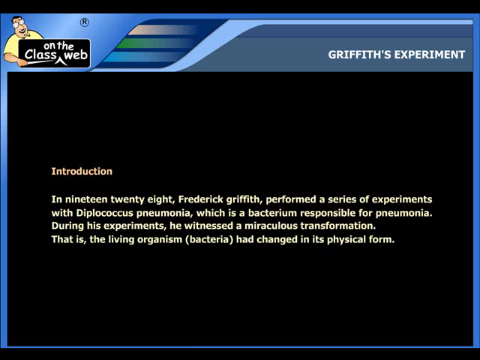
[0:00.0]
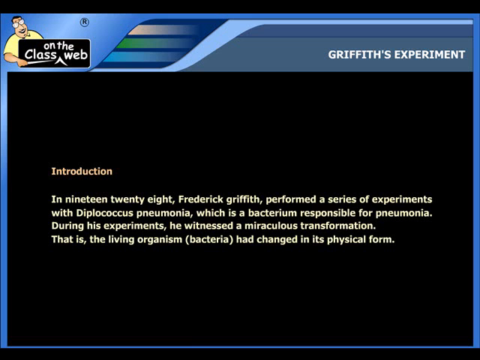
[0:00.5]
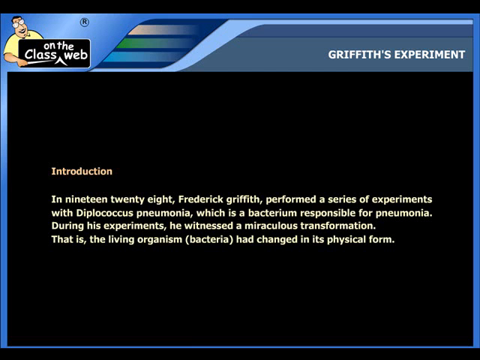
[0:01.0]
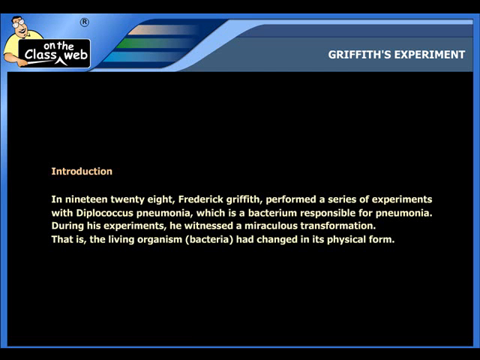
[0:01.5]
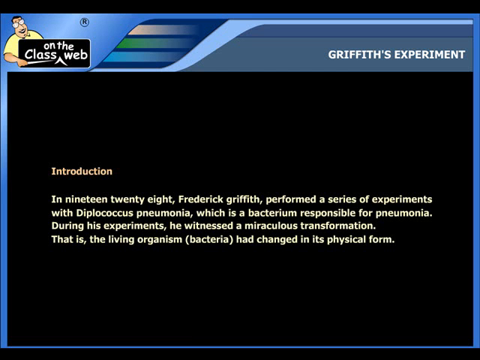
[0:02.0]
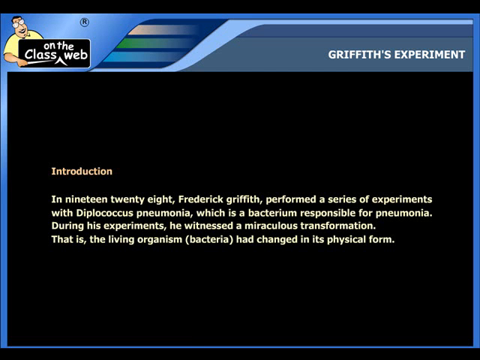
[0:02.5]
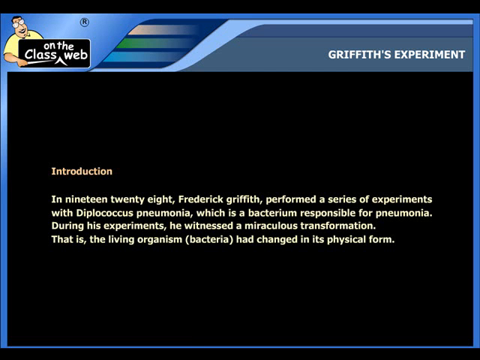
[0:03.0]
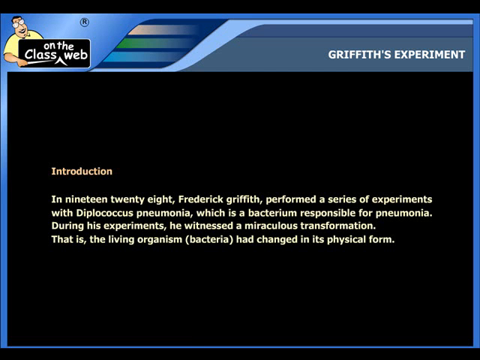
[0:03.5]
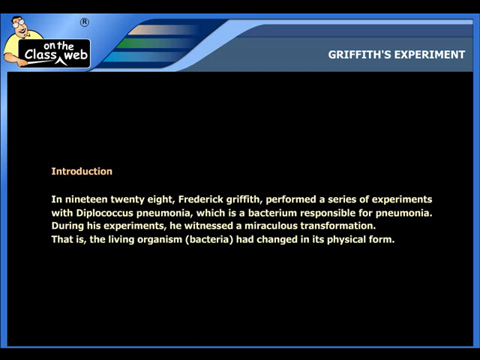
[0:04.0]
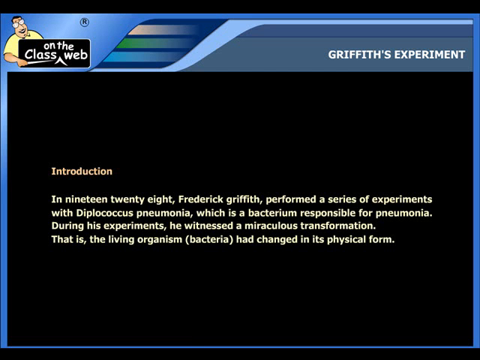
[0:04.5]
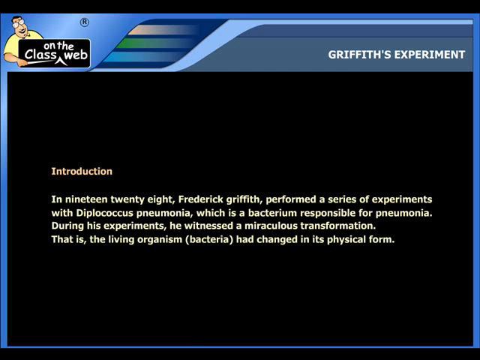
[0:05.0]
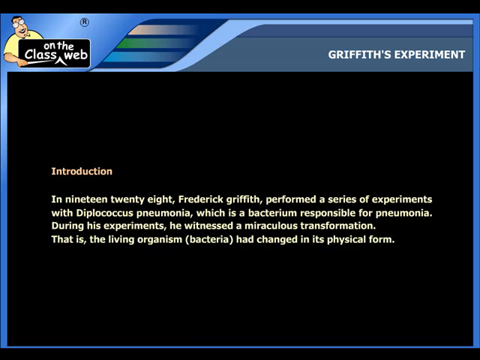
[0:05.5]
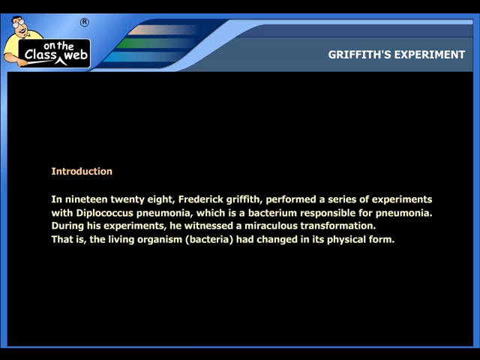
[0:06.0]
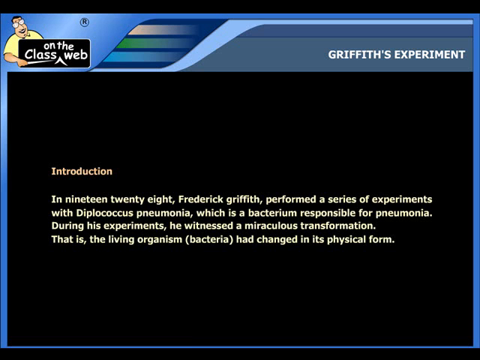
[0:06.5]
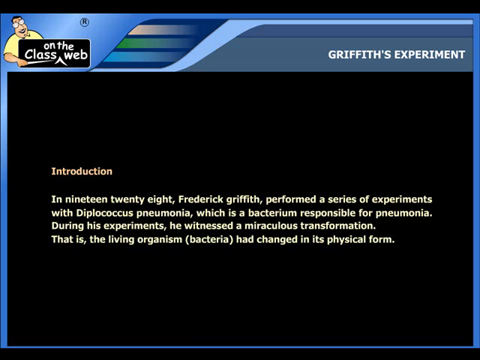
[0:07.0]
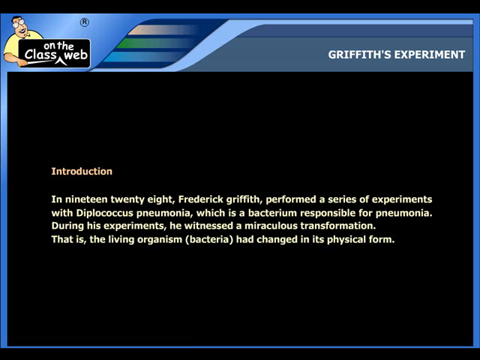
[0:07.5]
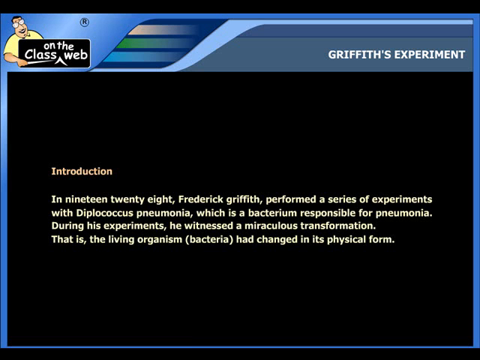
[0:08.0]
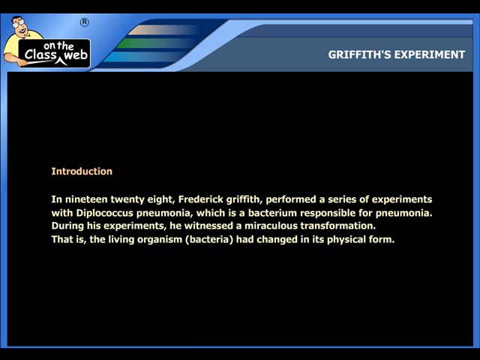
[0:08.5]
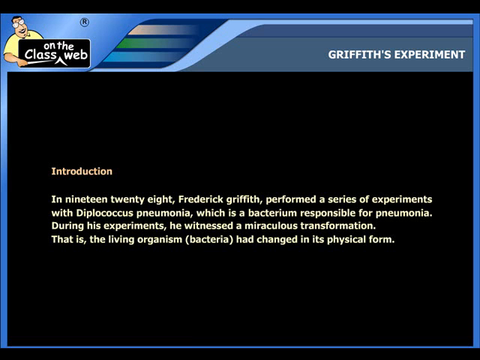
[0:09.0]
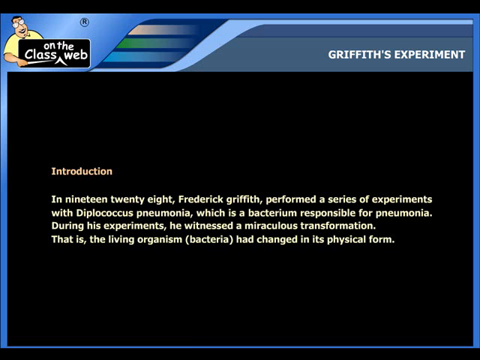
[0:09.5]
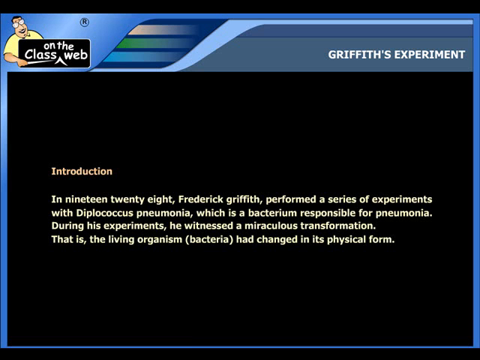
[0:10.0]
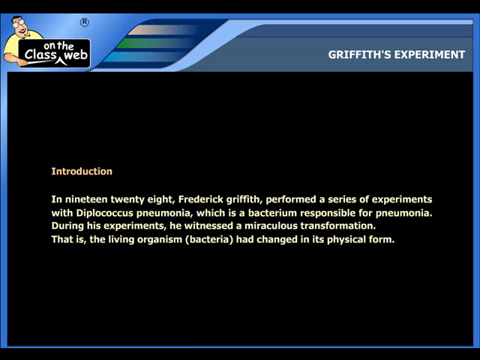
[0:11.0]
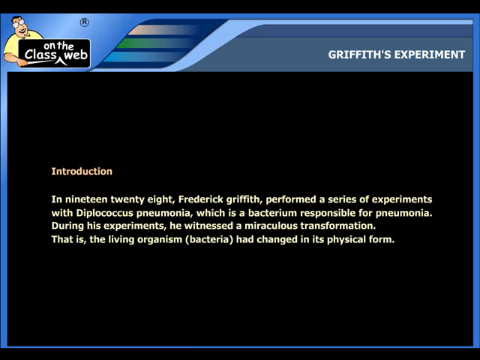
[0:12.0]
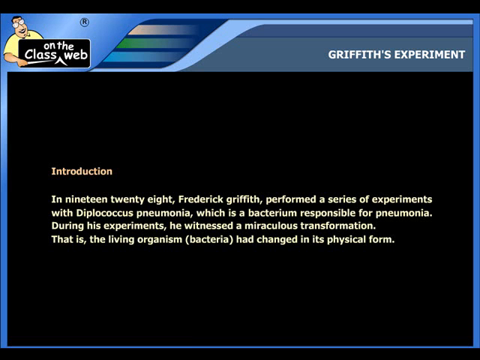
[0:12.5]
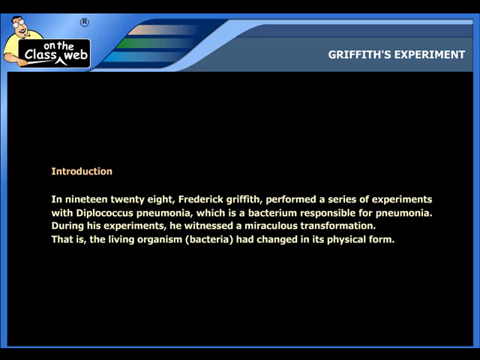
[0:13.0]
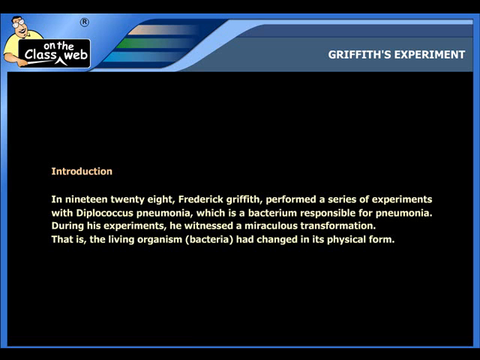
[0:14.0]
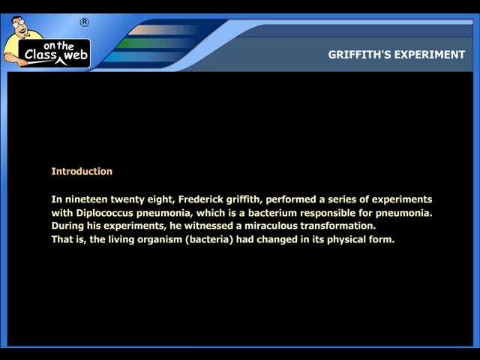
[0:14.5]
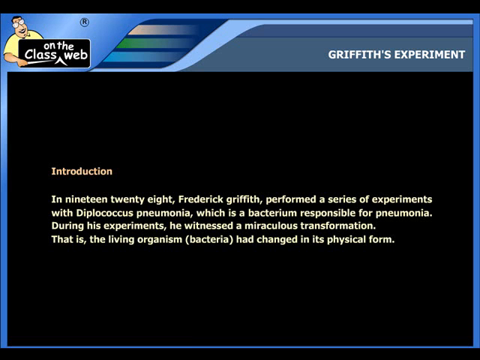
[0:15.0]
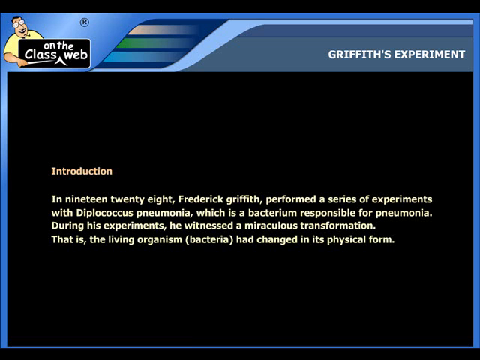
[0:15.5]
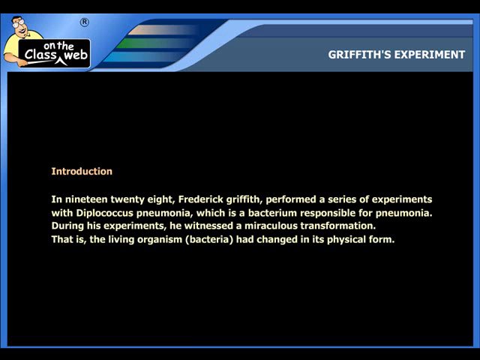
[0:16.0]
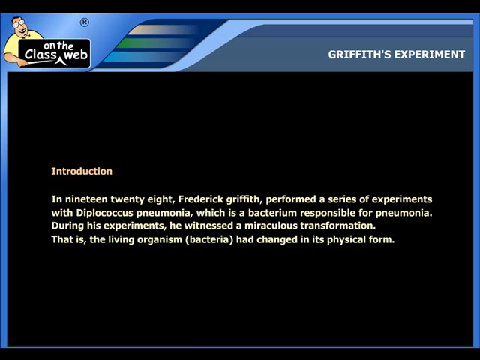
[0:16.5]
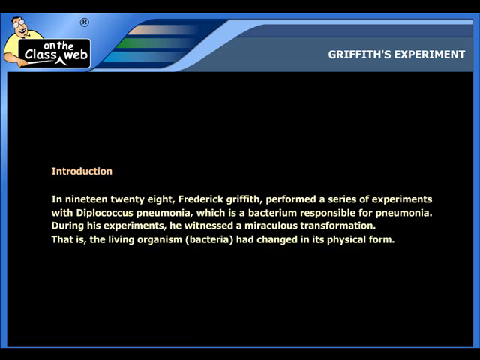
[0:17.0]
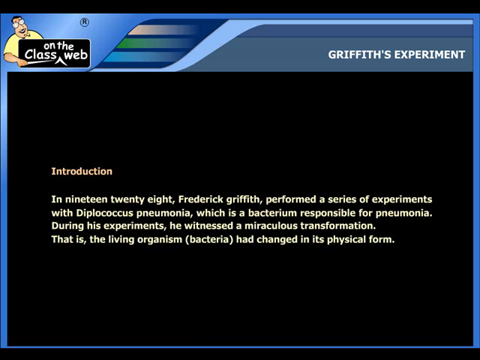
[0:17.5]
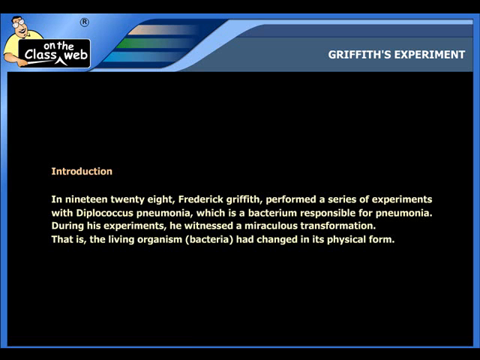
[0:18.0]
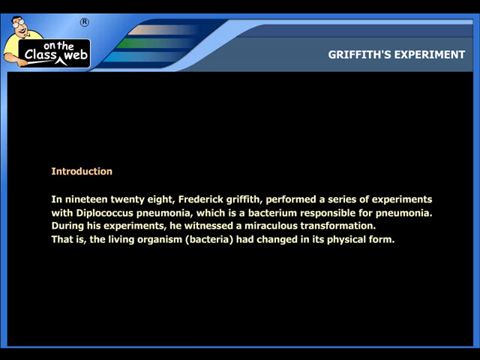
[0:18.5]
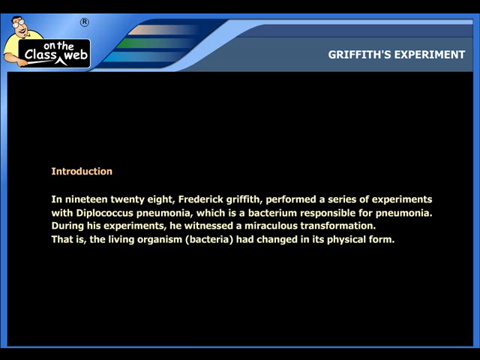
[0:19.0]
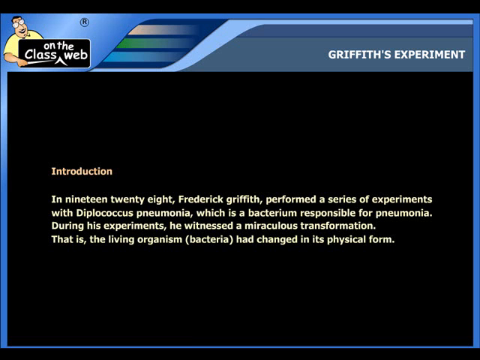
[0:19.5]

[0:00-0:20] In the top left corner, a cartoon figure with a yellow shirt, glasses and dark hair holds a sign that says "on the class web." To the right, white lettering reads "Griffith's Experiment." In the middle of the black screen is the heading "Introduction" in an off-red color, followed by small off-yellow text: "In 1928, Frederick Griffith performed a series of experiments with Diplococcus pneumonia, which is a bacterium responsible for pneumonia. During his experiments, he witnessed a miraculous transformation. That is, the living organism (bacteria) had changed its physical form."